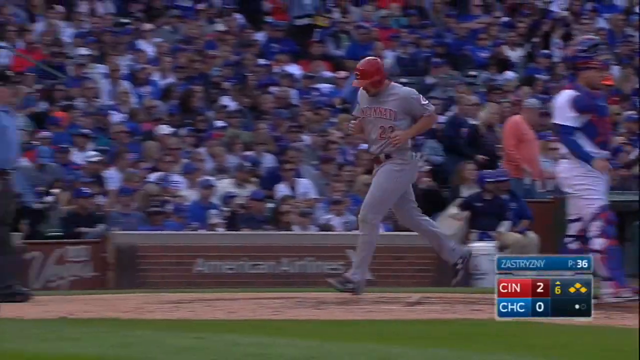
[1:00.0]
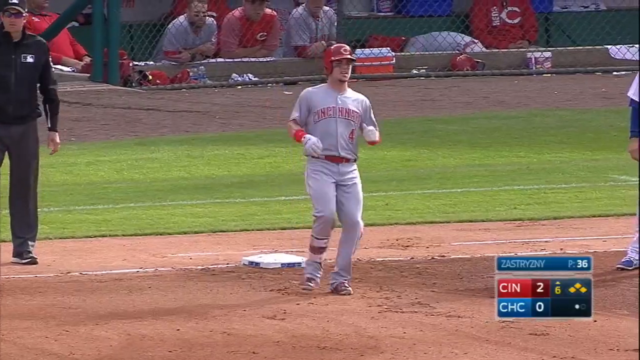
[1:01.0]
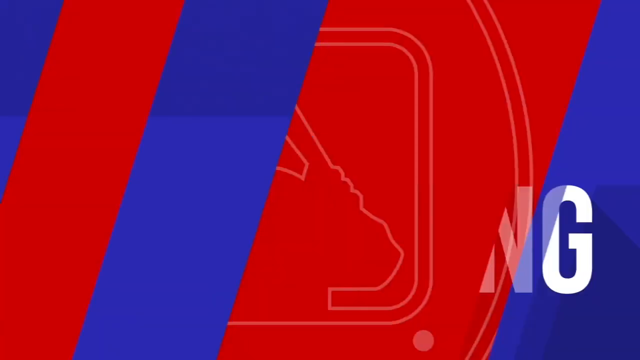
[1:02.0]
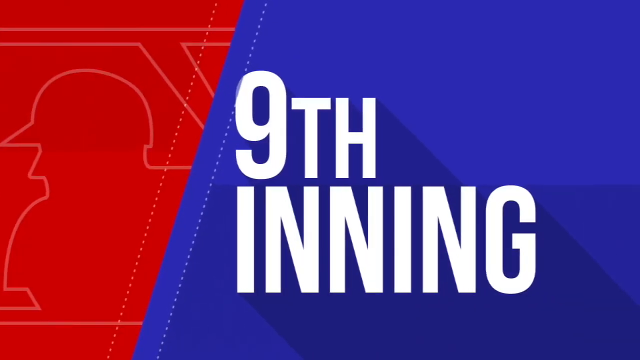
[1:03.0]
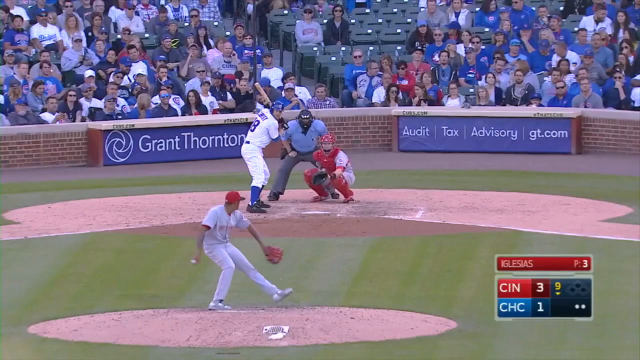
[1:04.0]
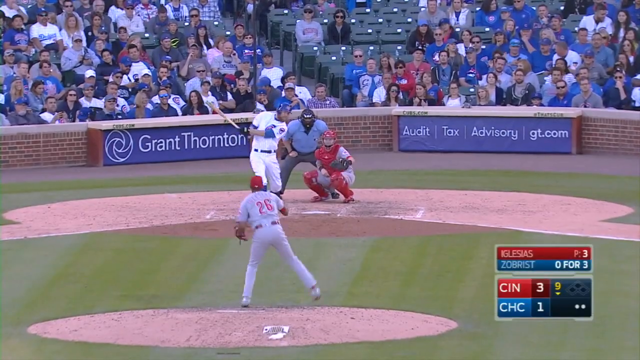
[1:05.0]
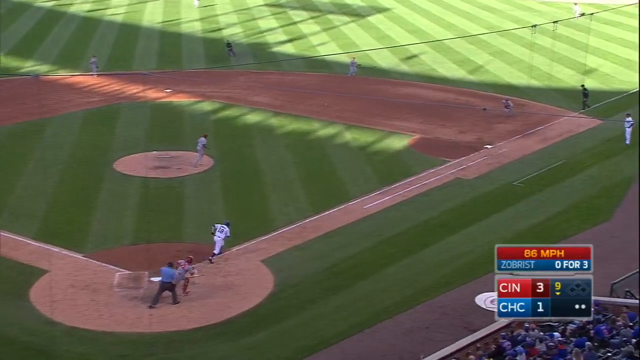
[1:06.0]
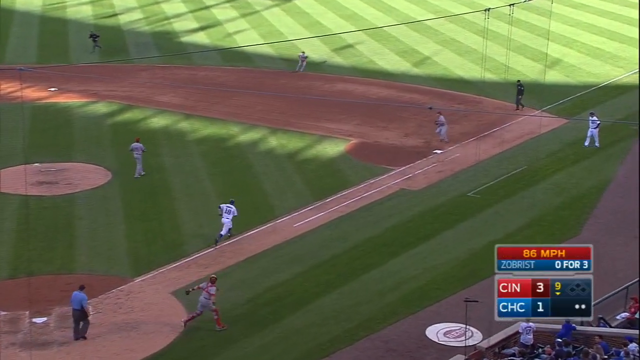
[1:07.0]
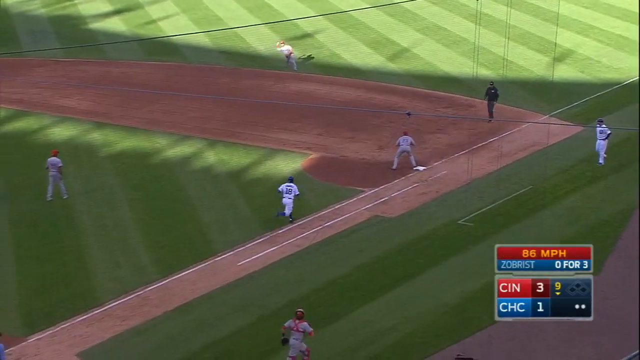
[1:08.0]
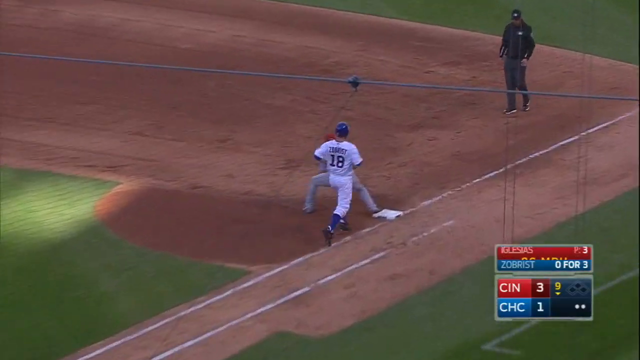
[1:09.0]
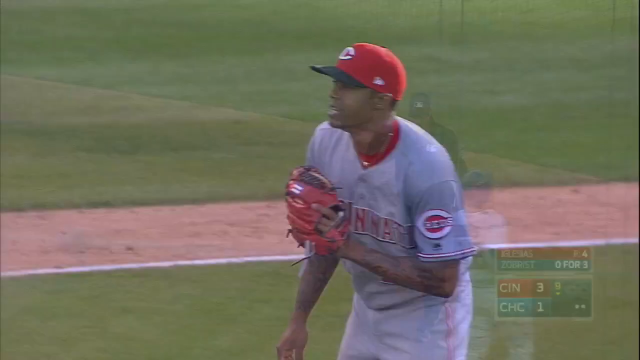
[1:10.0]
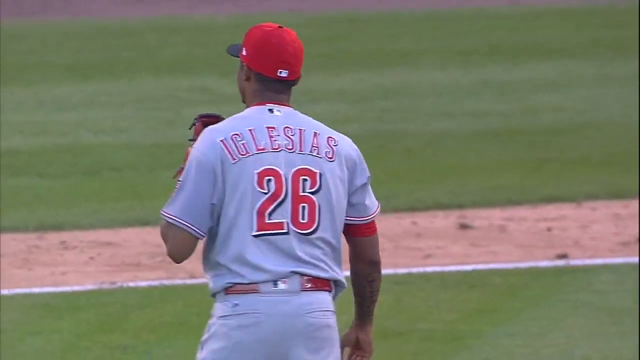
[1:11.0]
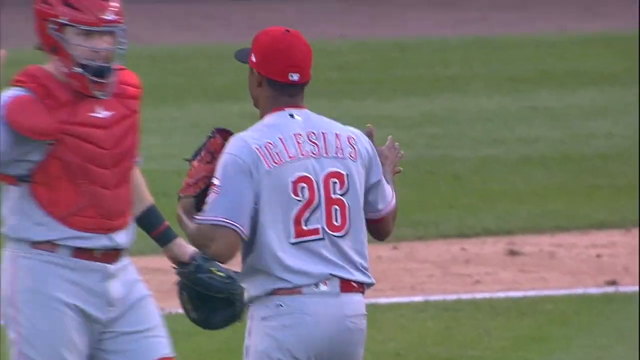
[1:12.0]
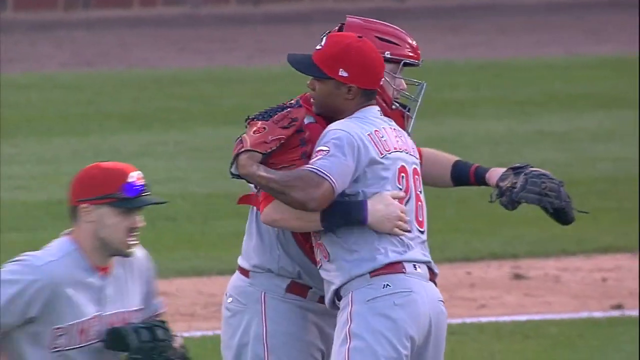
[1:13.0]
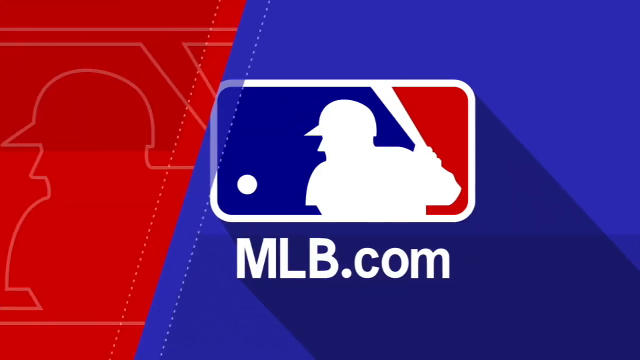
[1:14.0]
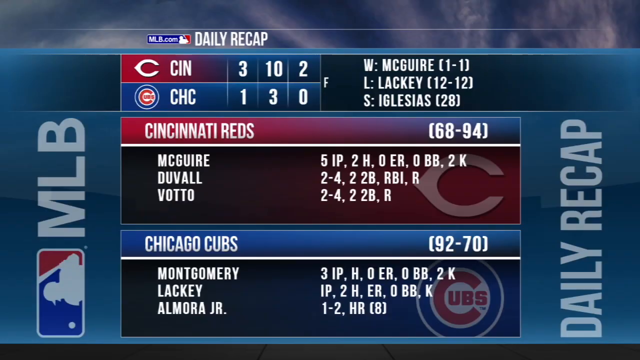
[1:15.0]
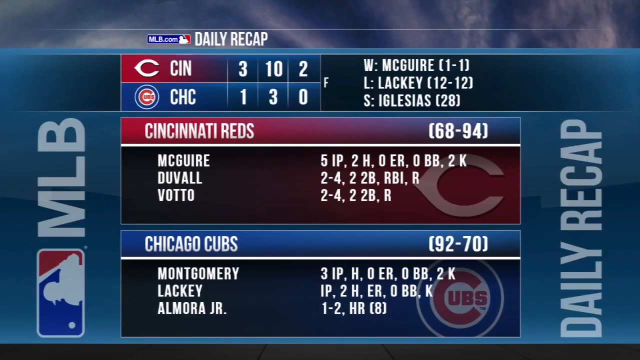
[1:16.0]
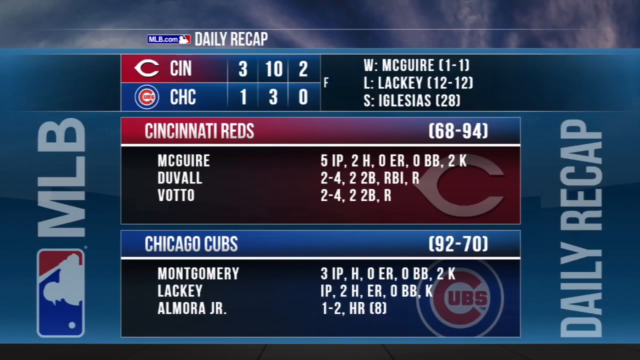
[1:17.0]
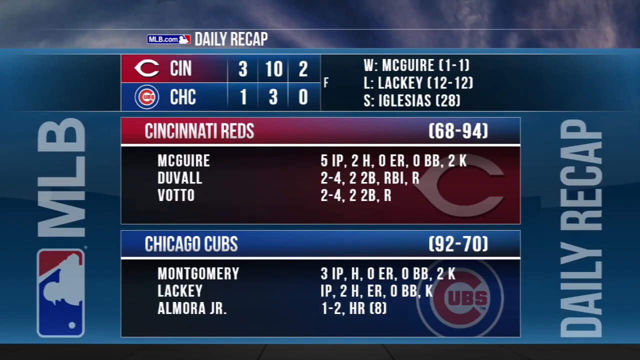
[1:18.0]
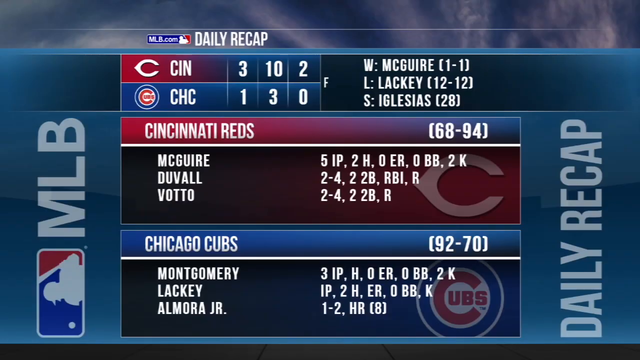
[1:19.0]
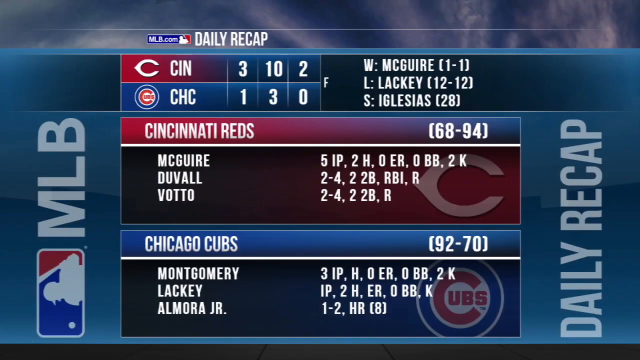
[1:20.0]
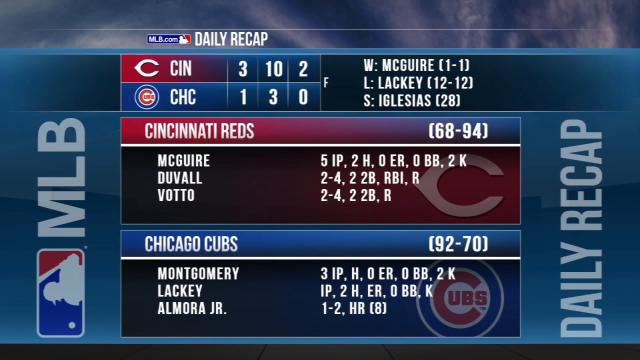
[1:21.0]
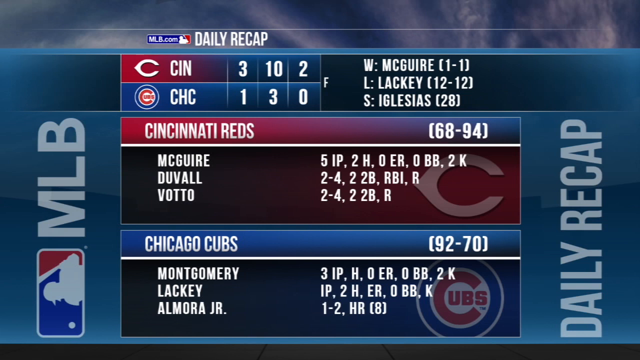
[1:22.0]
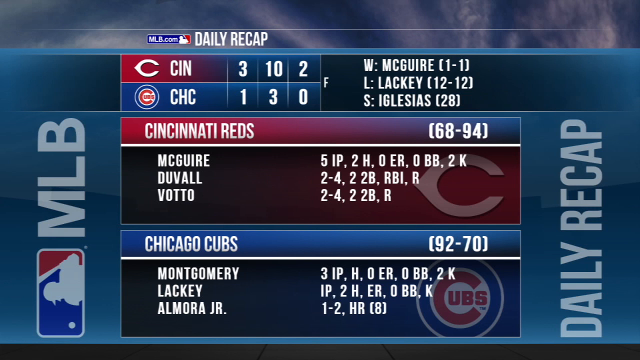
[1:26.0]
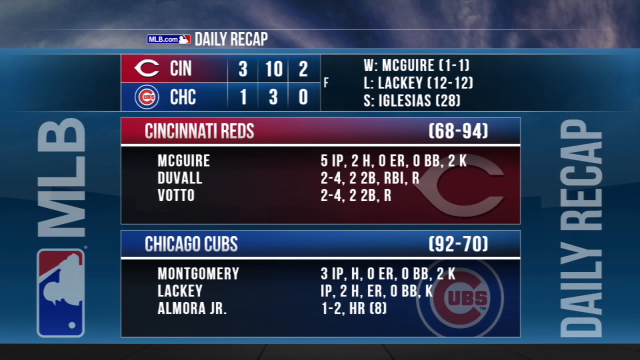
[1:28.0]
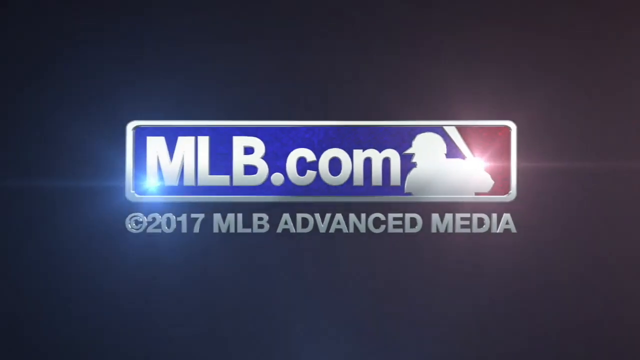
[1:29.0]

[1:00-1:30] The graphic at the bottom still shows "CIN 2 CHC 0", with a blue bar bearing the name "Zastryzny" and, on the right side, "P36". A batter runs around the bases but stops. Another graphic follows, with colors on either side separated by a diagonal and "9th inning" in large font on the right-hand side of the screen. The picture returns, and the graphic at the bottom right now reads "Iglesias" in the red bar with "P3" at its right side, and below it, in the blue bar, "Zobrist" with "0 for 3". The score now shows "CIN 3 CHC 1", and next to it at the bottom of the square are a 9 and a down arrow, presumably signifying the 9th inning. About the top third of the image shows a crowd, many dressed in blue with some in grey and some in red, and a staircase running on a fairly light diagonal from about the area behind the umpire off to the left. The pitcher, number 26, pitches to a left-handed batter, who makes fairly poor contact so the ball rolls along the ground; it is quickly returned to first base, but the batter is safe.